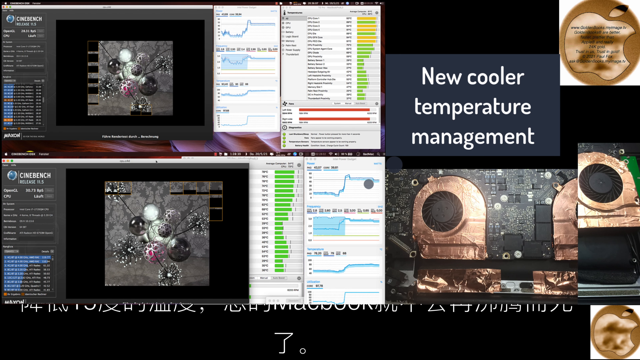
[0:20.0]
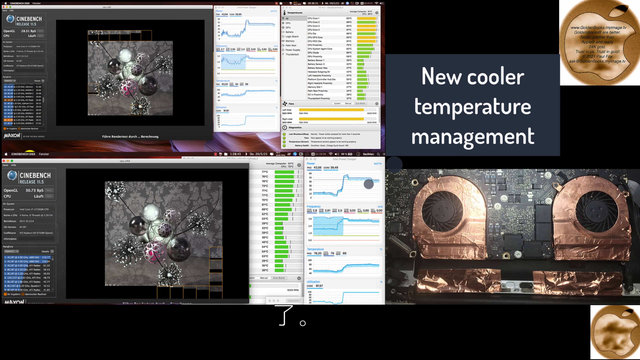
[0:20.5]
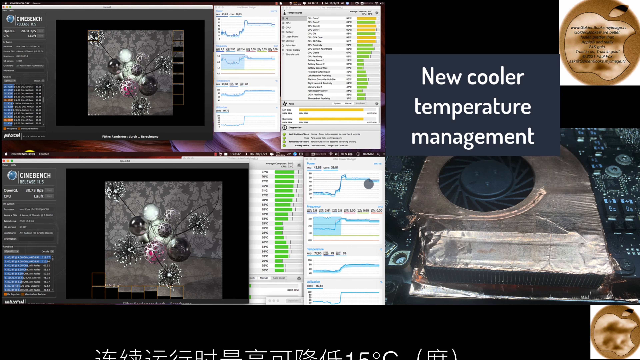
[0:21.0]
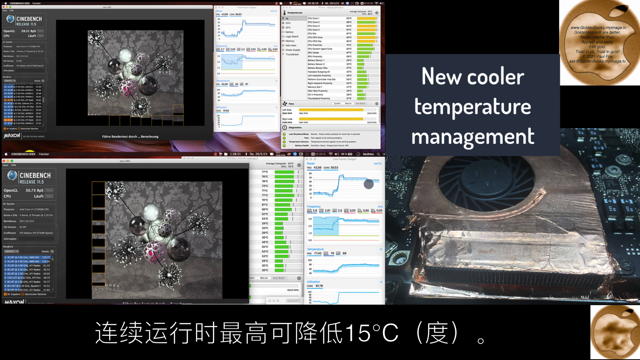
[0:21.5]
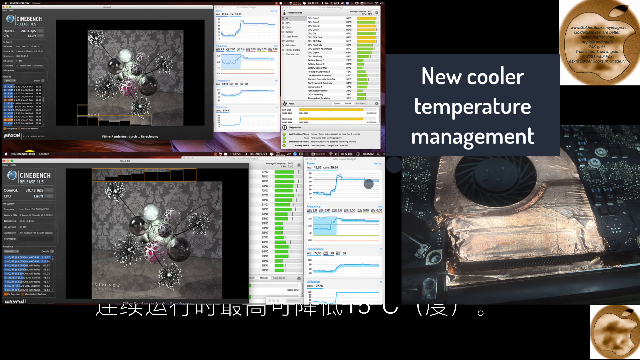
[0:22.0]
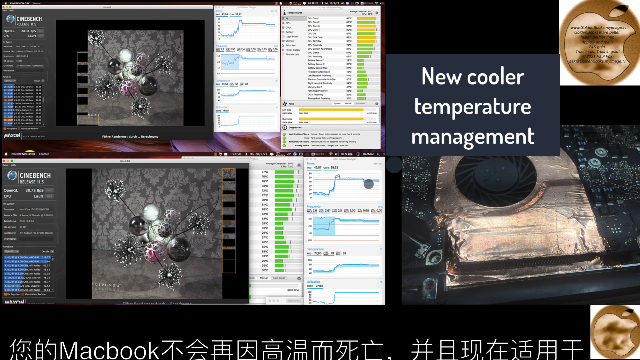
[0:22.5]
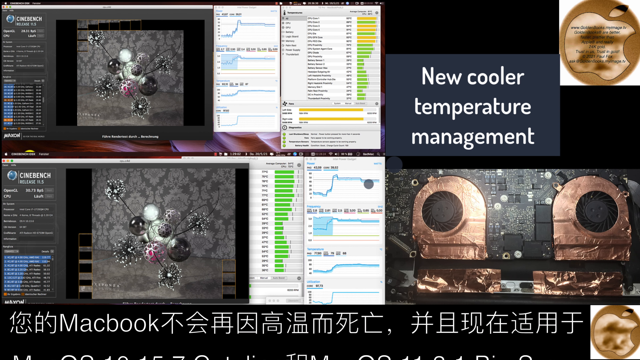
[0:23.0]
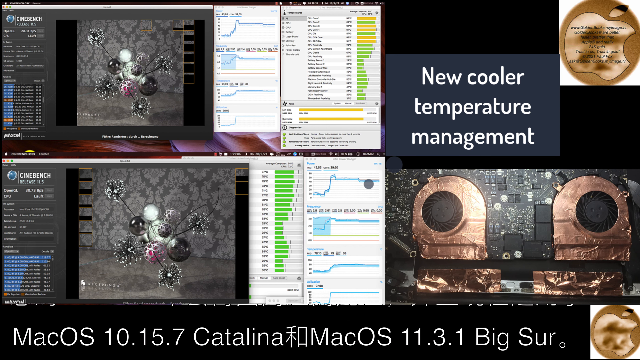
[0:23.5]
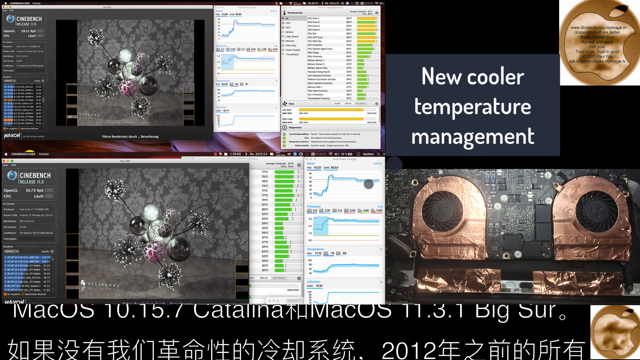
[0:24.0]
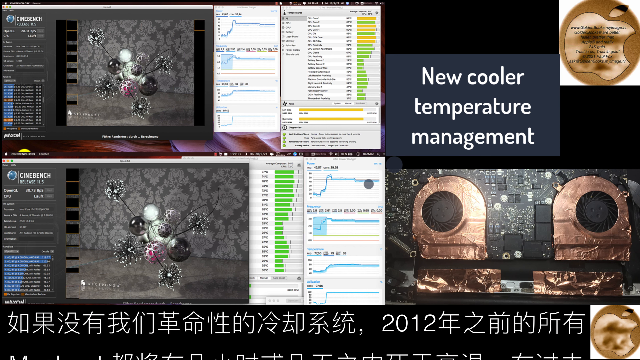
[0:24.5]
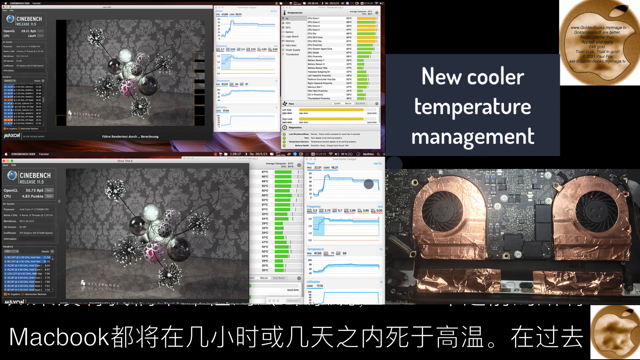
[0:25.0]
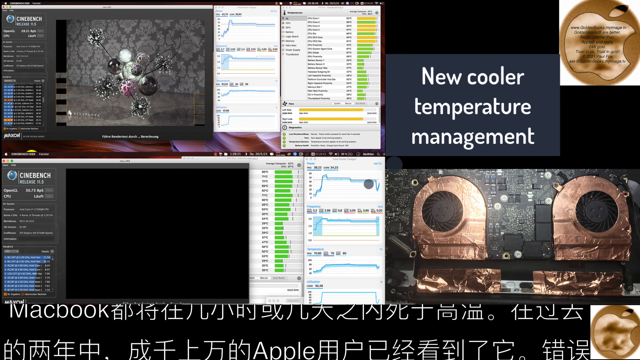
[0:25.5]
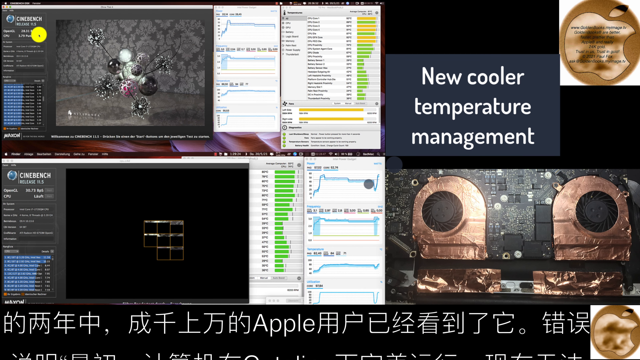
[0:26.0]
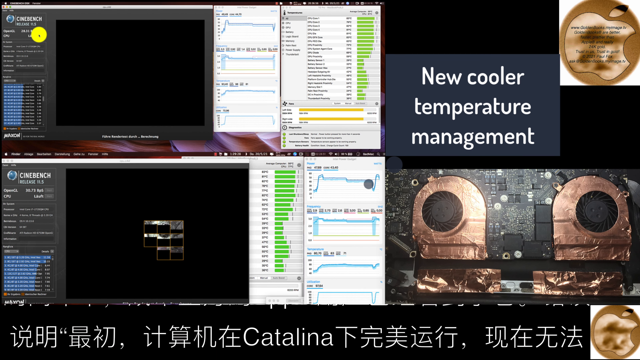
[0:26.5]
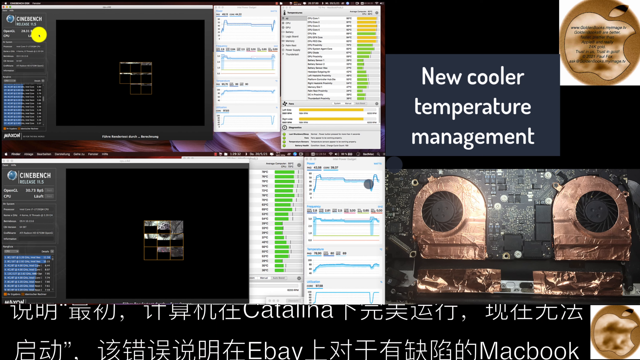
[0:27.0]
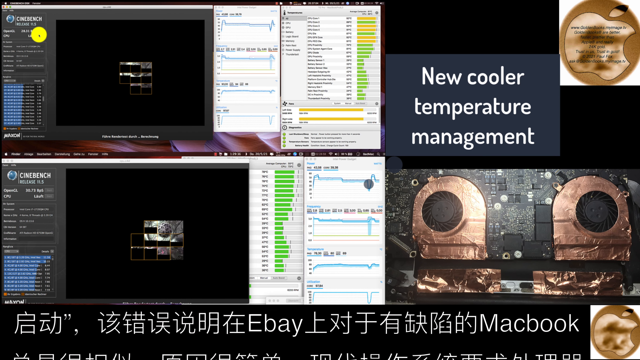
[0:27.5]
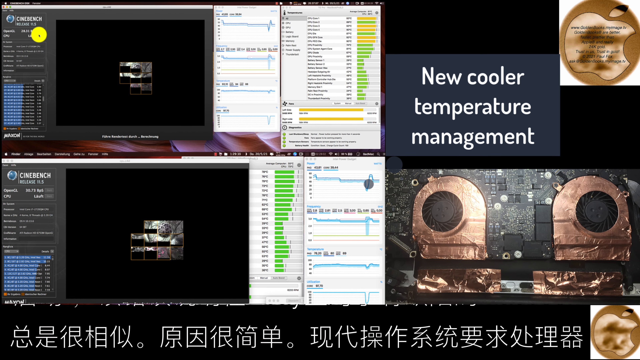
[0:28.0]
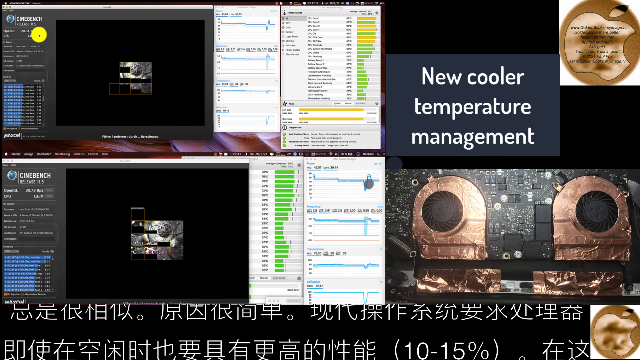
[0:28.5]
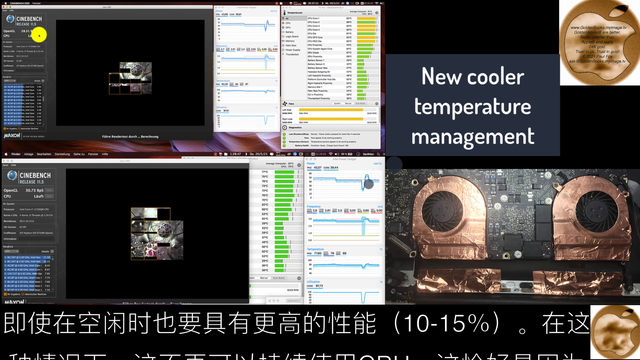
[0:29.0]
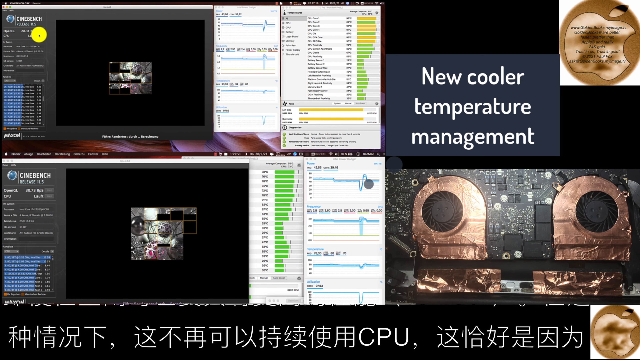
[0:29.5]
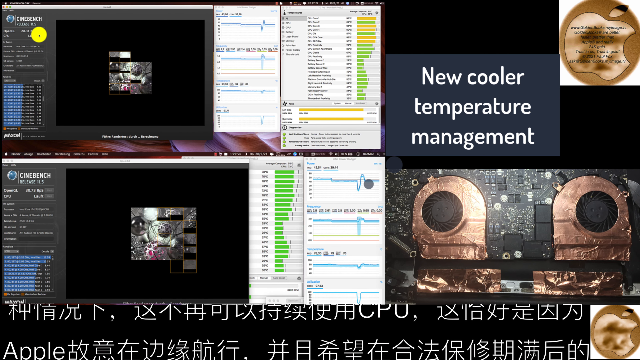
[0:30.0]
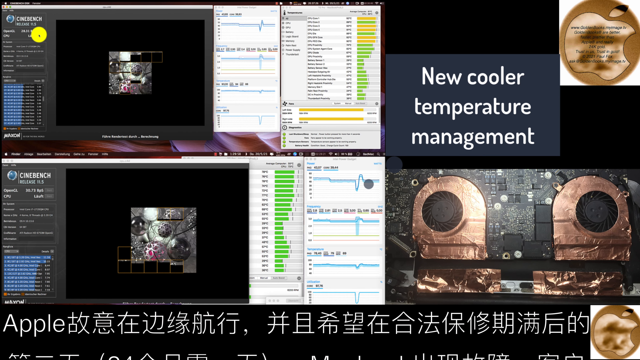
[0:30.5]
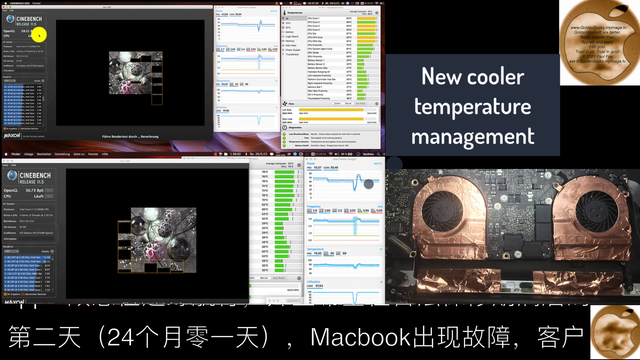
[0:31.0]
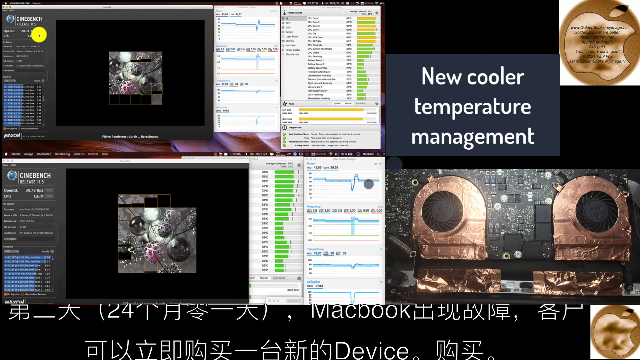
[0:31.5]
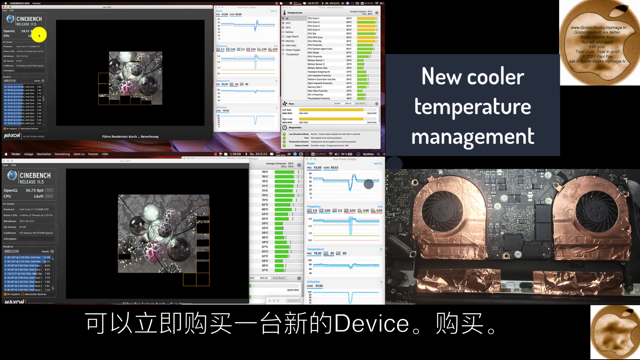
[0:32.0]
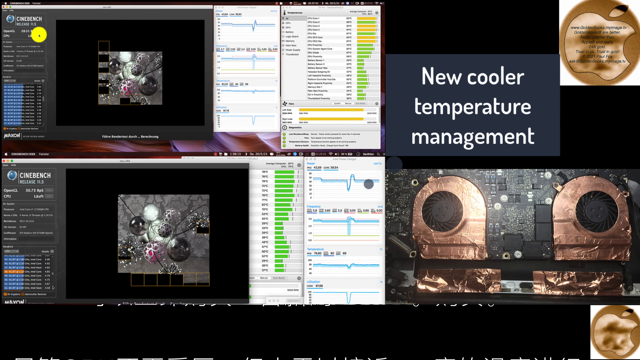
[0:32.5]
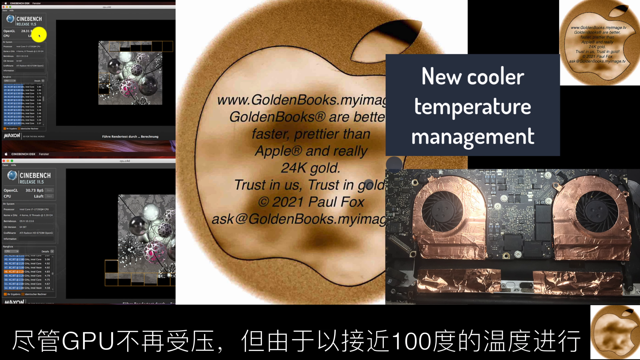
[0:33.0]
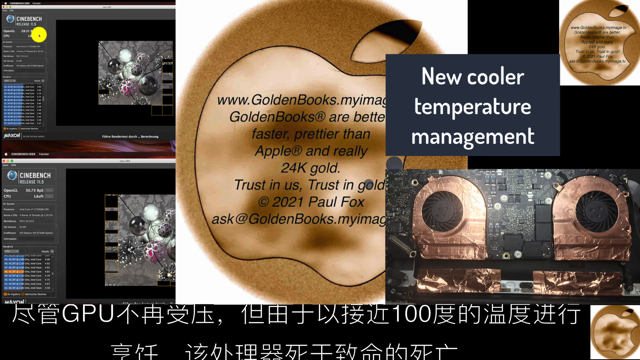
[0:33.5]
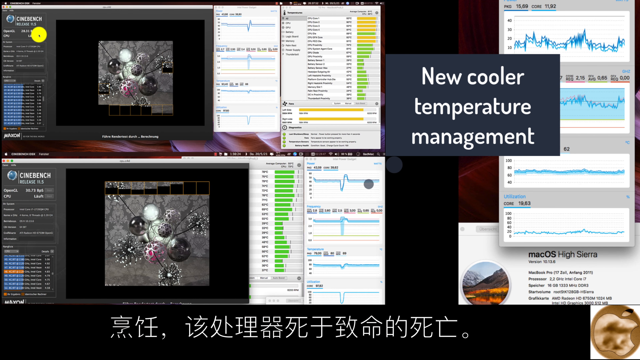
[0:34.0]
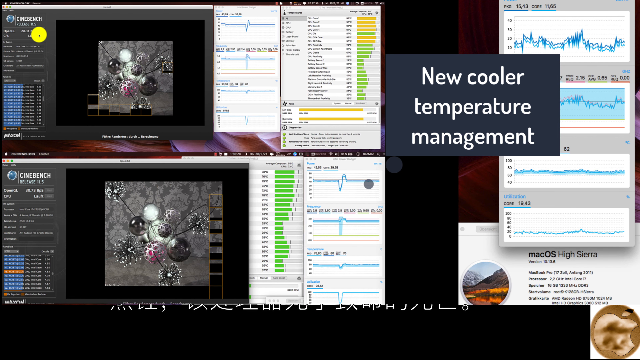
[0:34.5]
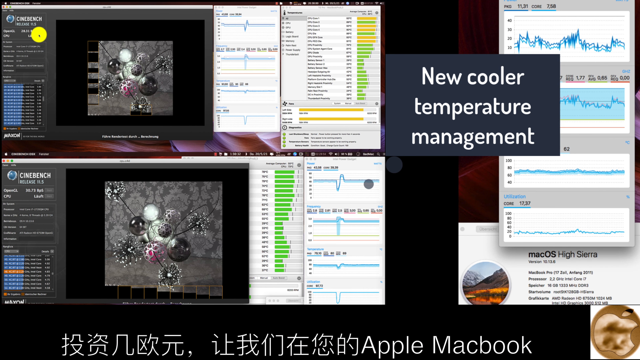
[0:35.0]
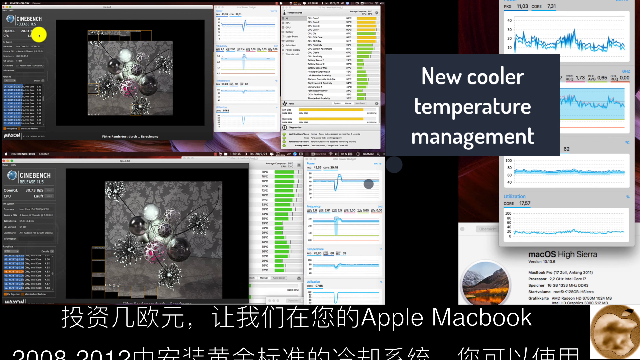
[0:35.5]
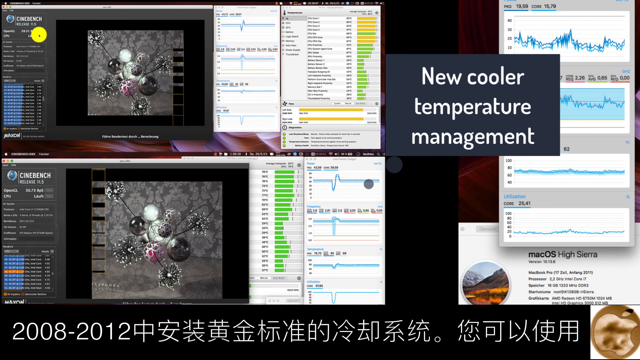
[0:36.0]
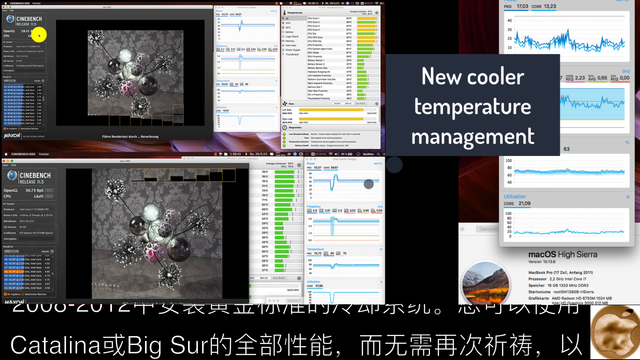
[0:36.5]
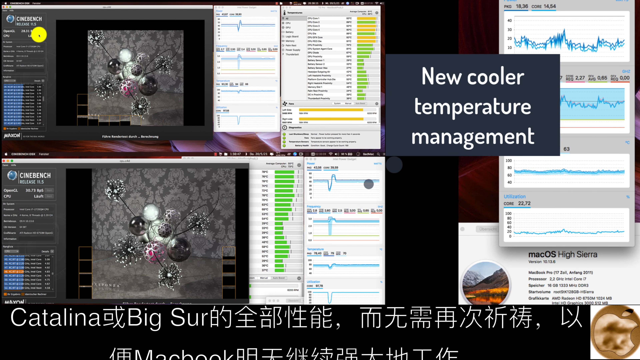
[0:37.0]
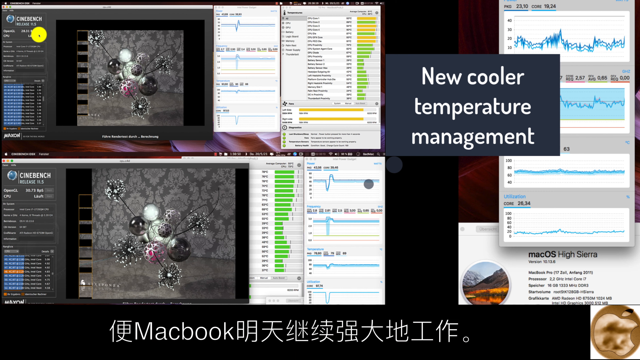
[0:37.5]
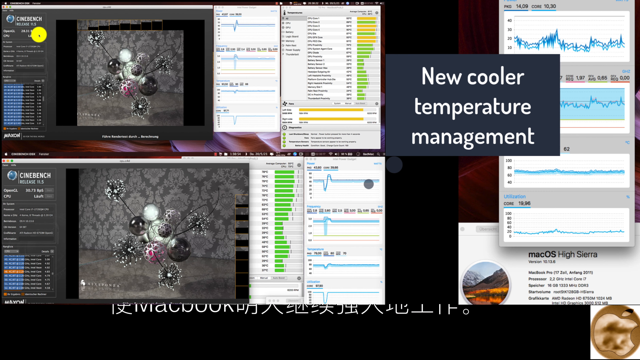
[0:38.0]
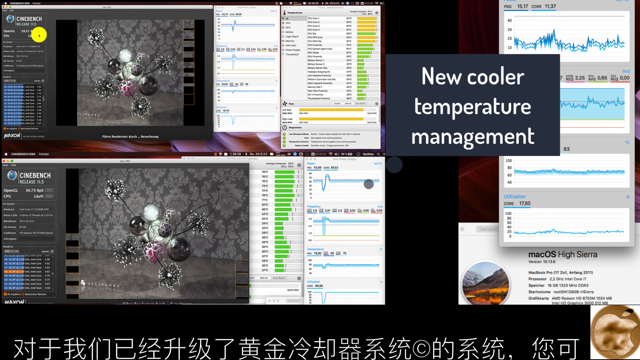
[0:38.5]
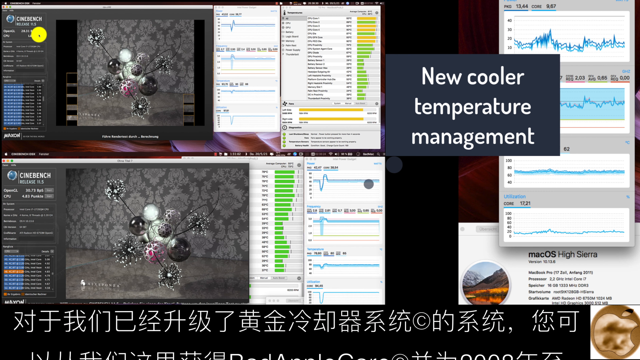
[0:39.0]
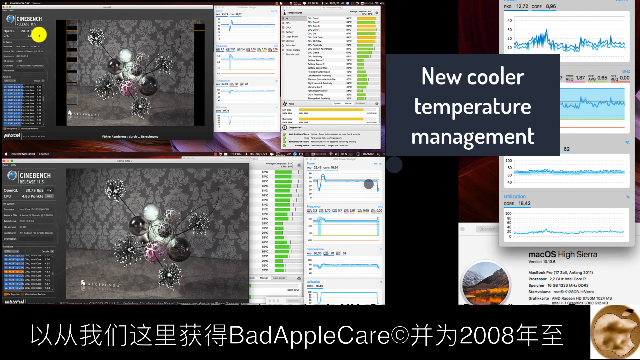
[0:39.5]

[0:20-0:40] Two video benchmarks keep running on the left side of the screen, each filling in an image square by square in an outward spiral. The bottom benchmark is clearly outpacing the top one. On the right is the text "new cooler temperature management", along with photos of computer fans with black fans and a gold base around them, which are continually swapped through. At the bottom, Japanese text in white on black scrolls constantly. The fan photos are then replaced by an image of a horizontal line benchmark moving up and down with four different lines, with the text "Mac OS High Sierra" at the bottom. The golden Apple logo reappears in the upper right corner, and then in the center of the image, over the video benchmark but below the "New Cooler temperature management" text.